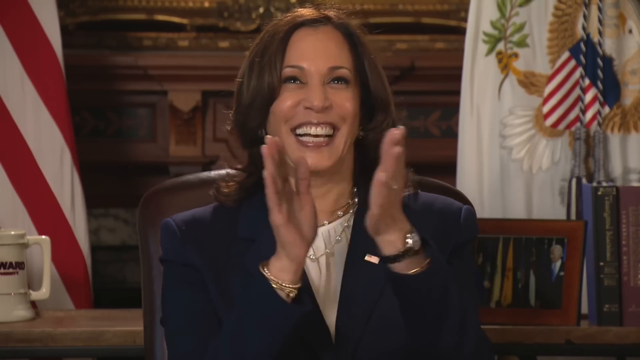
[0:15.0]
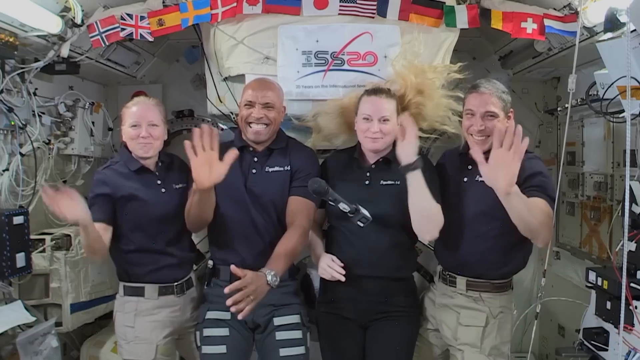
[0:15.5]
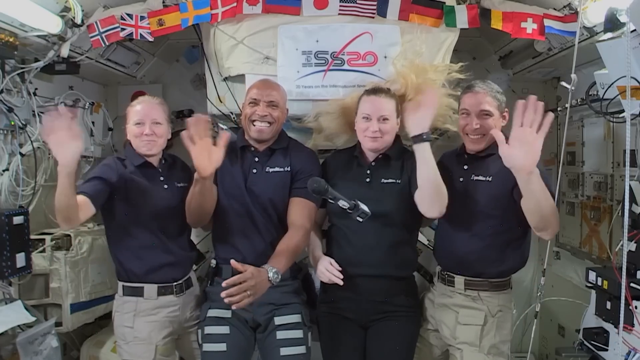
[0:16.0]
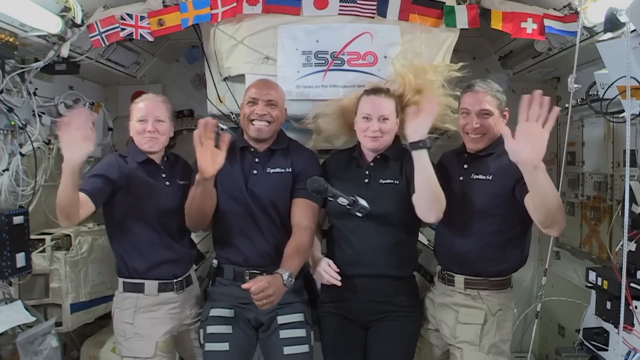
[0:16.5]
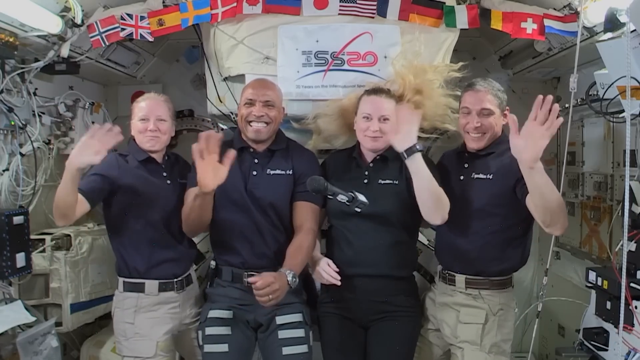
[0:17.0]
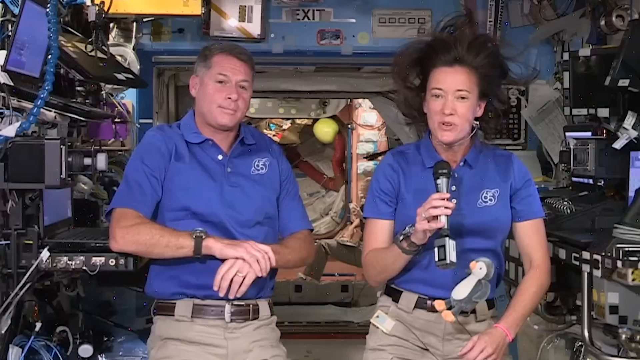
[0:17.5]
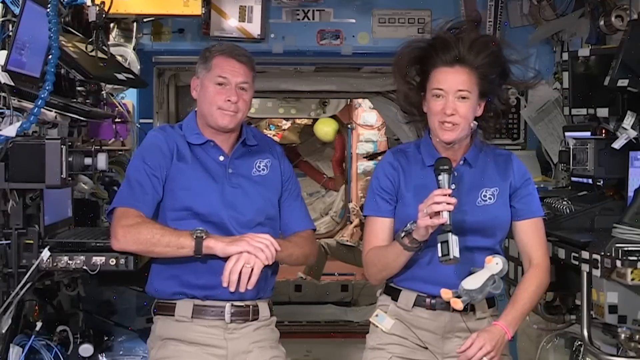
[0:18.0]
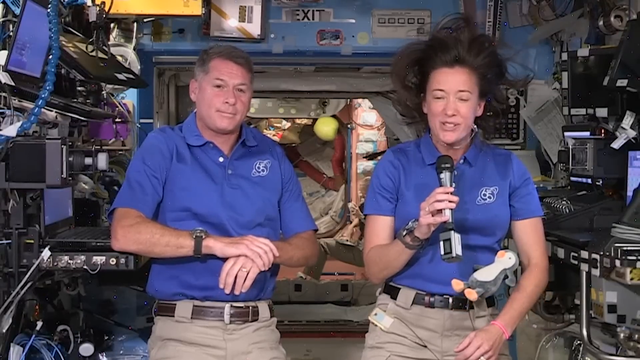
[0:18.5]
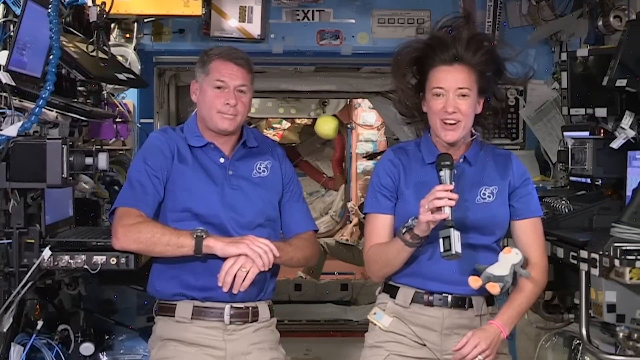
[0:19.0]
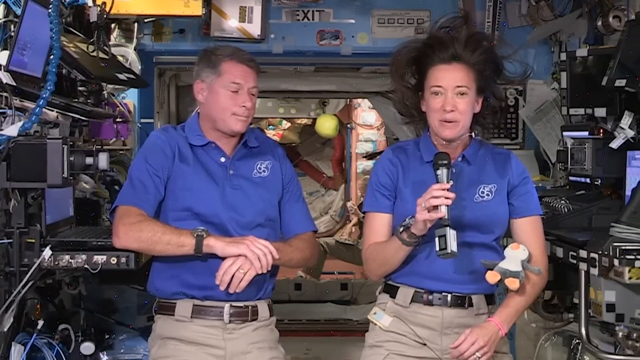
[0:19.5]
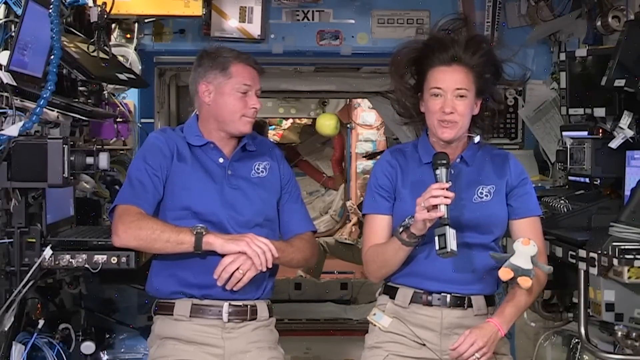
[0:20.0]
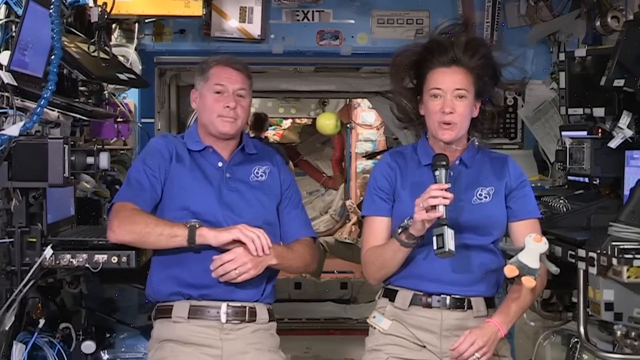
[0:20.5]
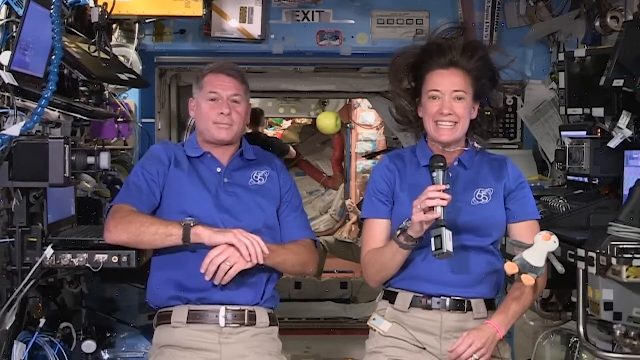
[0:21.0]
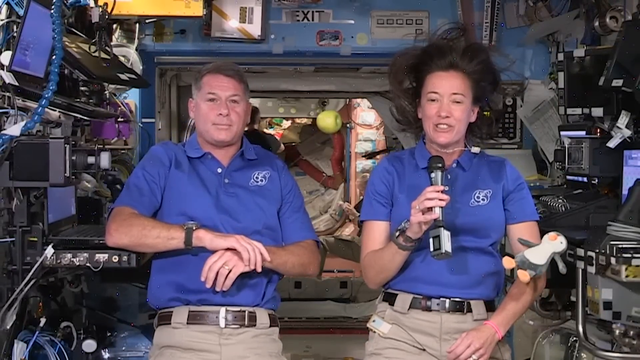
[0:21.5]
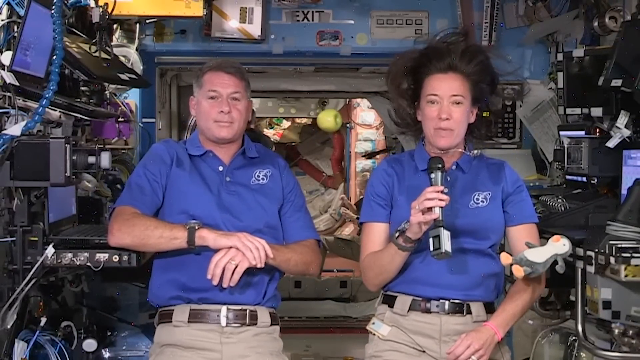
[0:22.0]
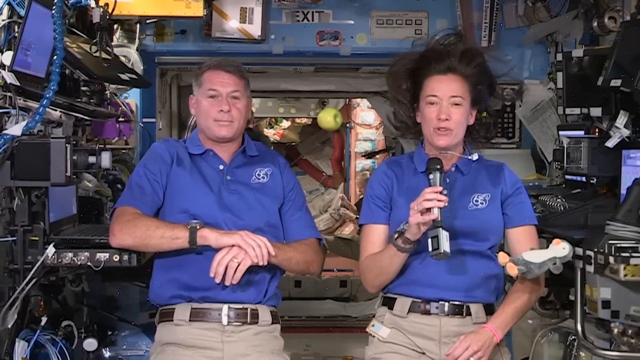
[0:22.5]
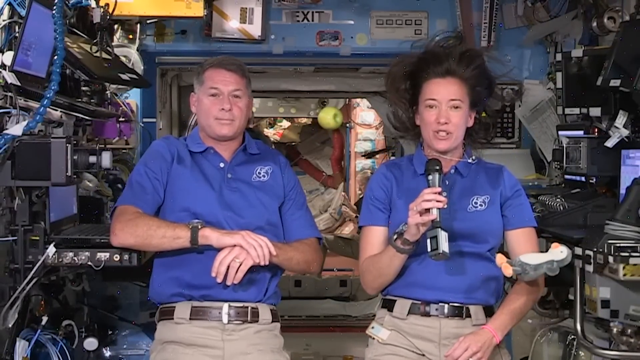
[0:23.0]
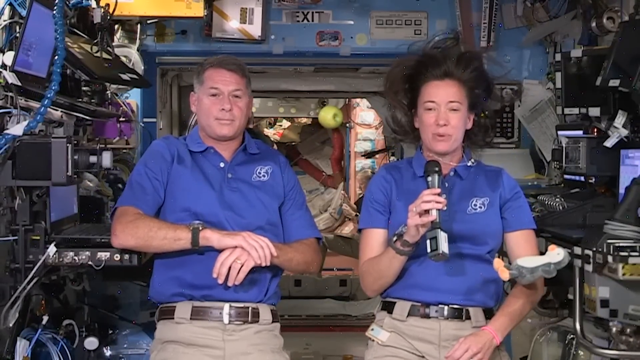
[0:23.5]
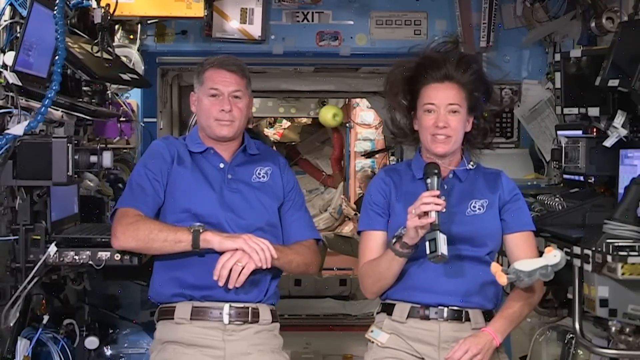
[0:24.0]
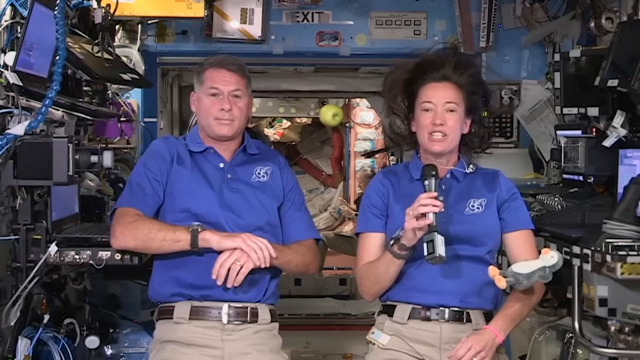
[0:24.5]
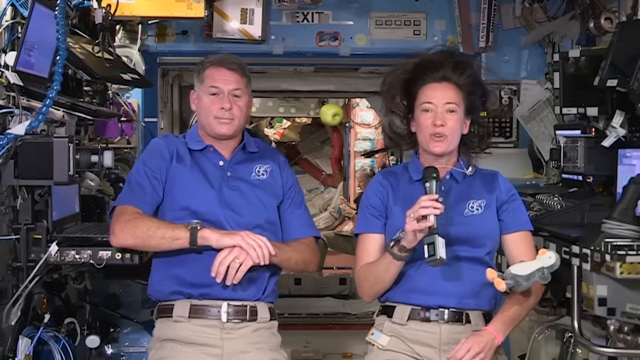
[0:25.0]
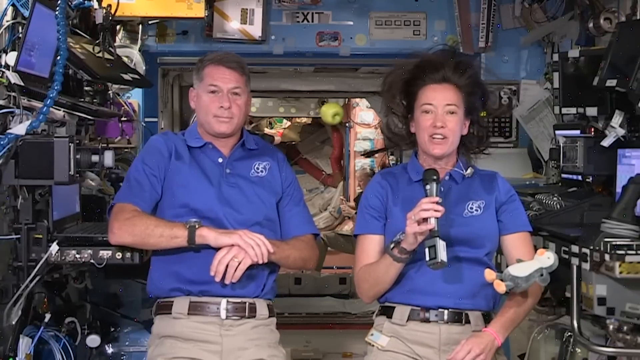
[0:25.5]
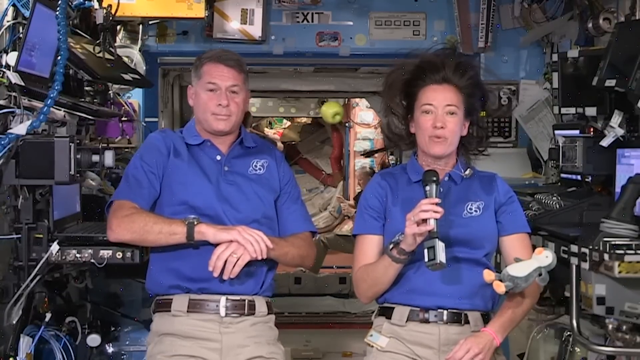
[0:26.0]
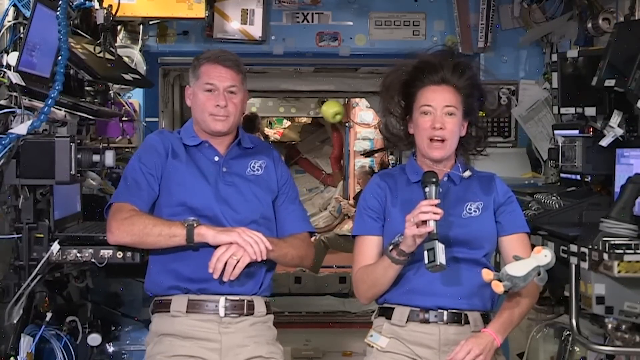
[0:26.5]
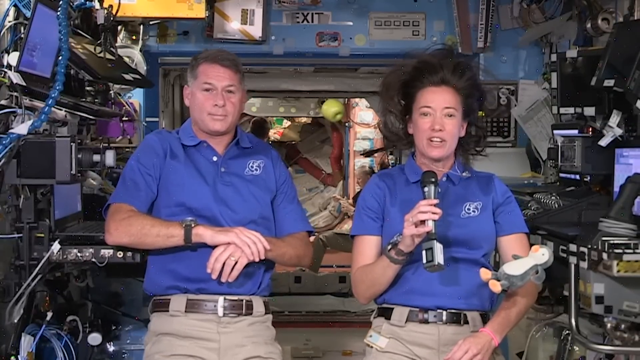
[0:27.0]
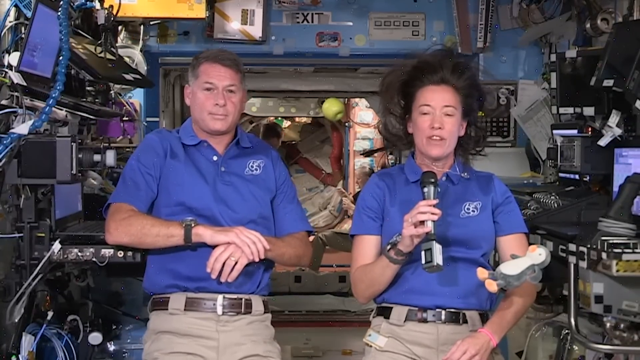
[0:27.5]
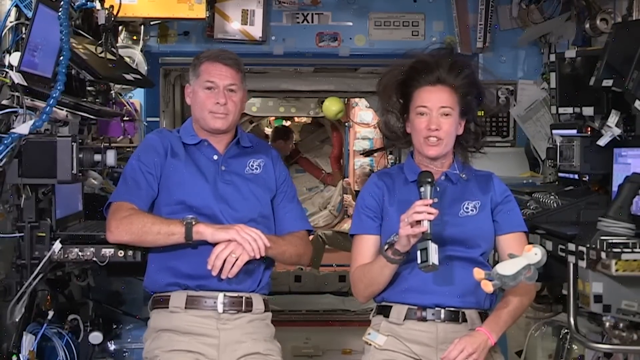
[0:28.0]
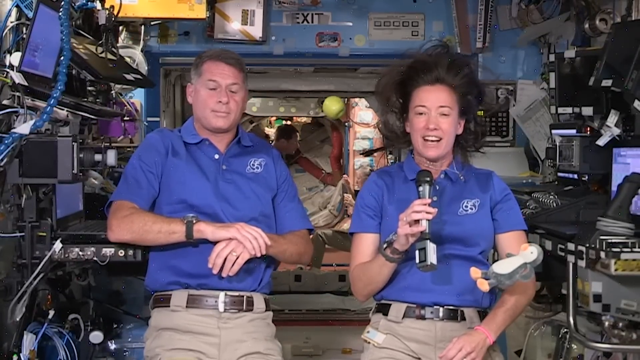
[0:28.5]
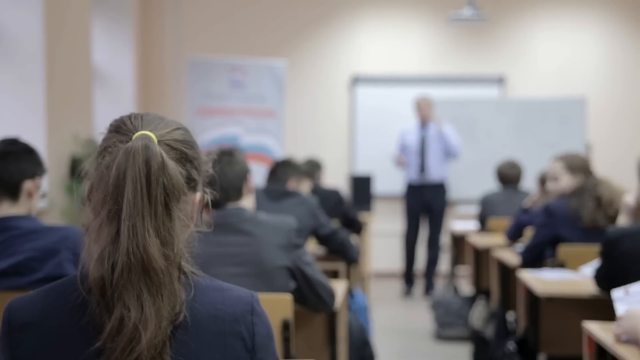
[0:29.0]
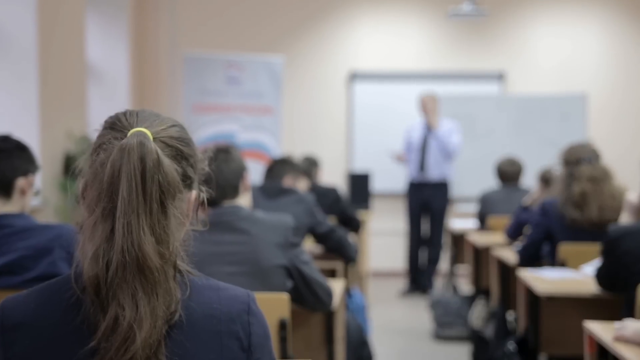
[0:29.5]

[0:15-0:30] Four astronauts are together on the ISS, with "ISS" labeled behind them. They look like two men and two women, and they look at the camera, smiling and waving. Lots of wires are to their left, and a collection of different flags is above them, presumably flags of the countries that have astronauts on the ISS. The video cuts back to the other two astronauts, who seem to be doing some sort of interview questions. A little penguin plushie floats around them, two more people are behind them, and there are lots of computers. The video then cuts to a classroom, where a teacher presents in front of a class; the image is very blurred and obscured, so only some details can be made out.